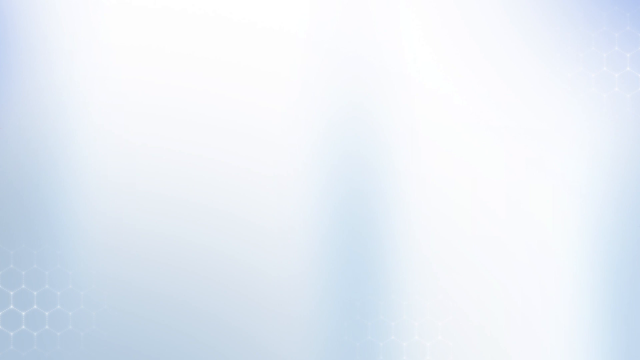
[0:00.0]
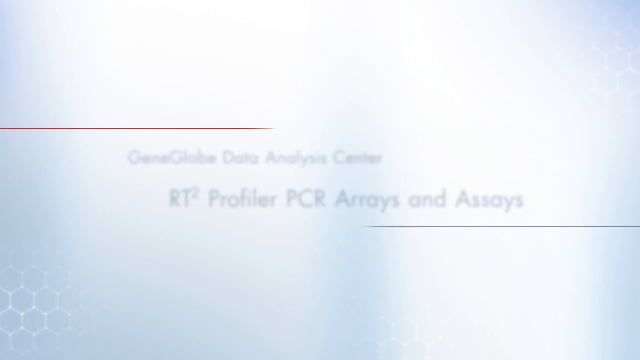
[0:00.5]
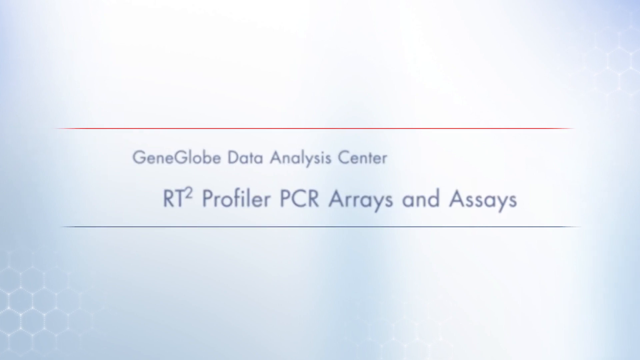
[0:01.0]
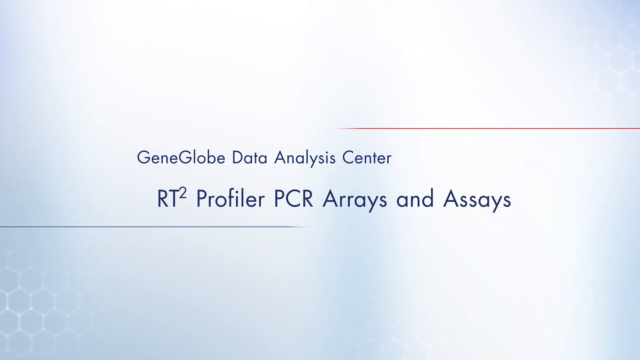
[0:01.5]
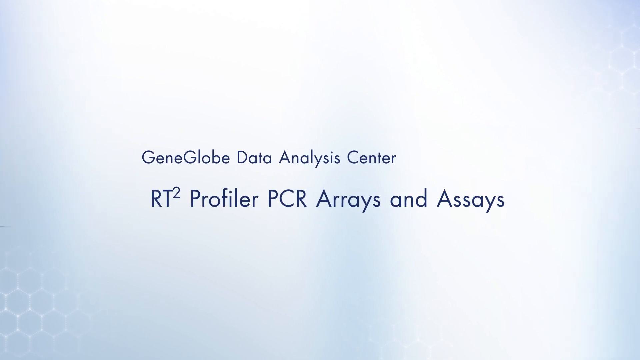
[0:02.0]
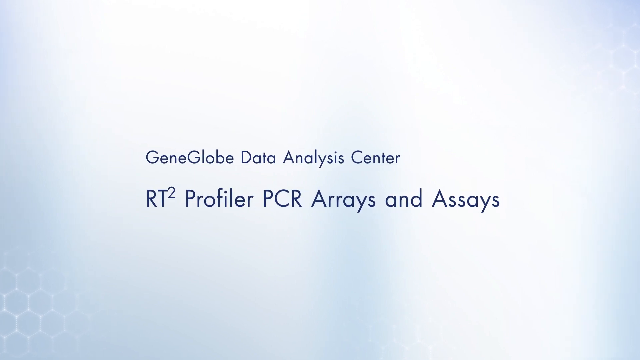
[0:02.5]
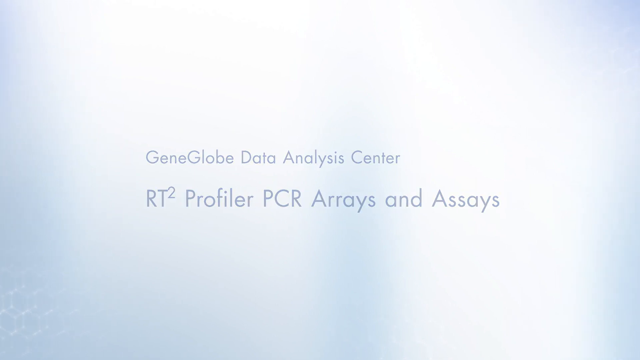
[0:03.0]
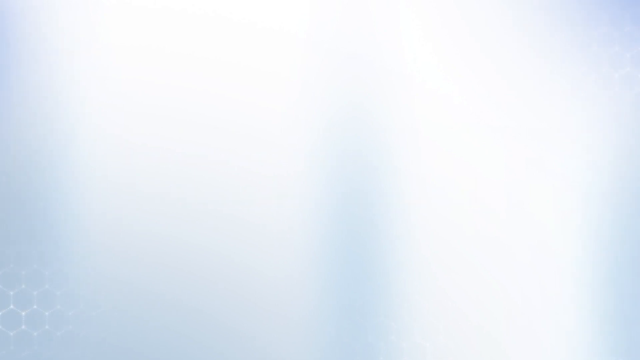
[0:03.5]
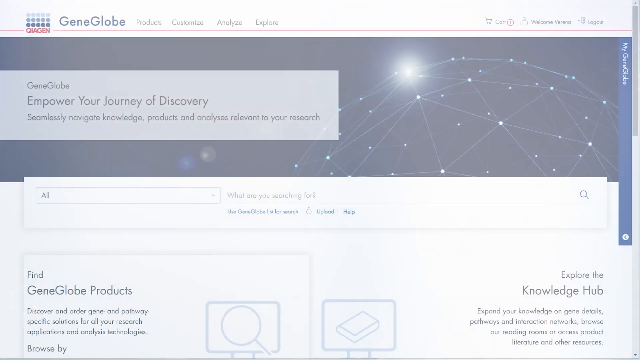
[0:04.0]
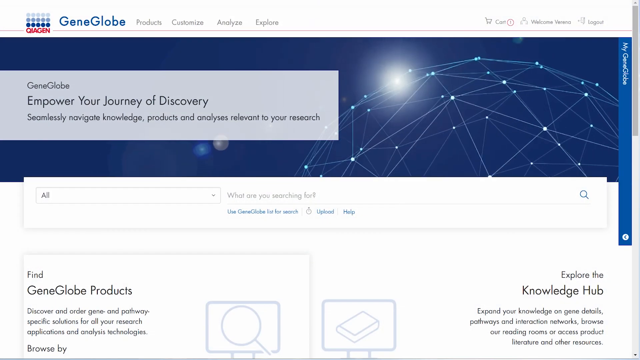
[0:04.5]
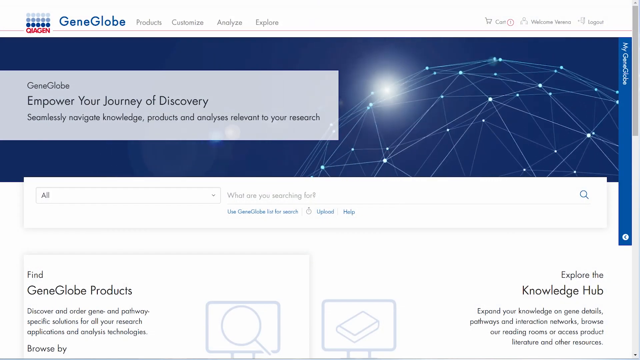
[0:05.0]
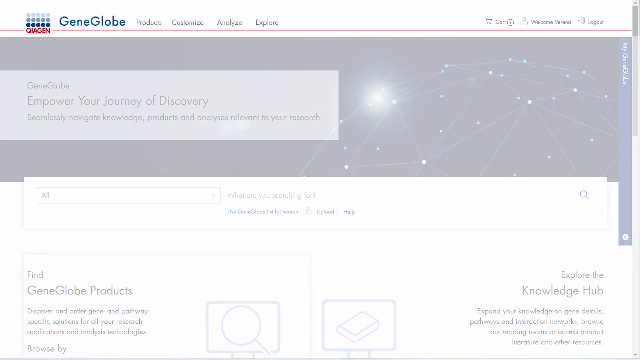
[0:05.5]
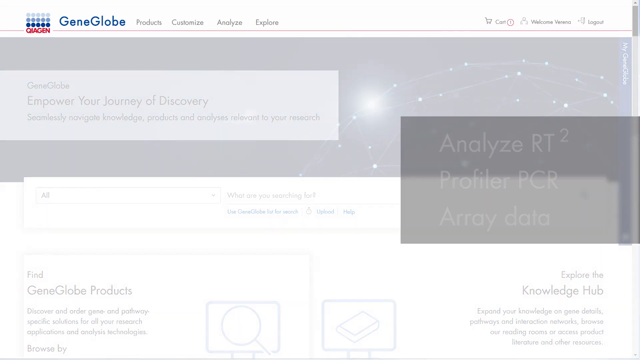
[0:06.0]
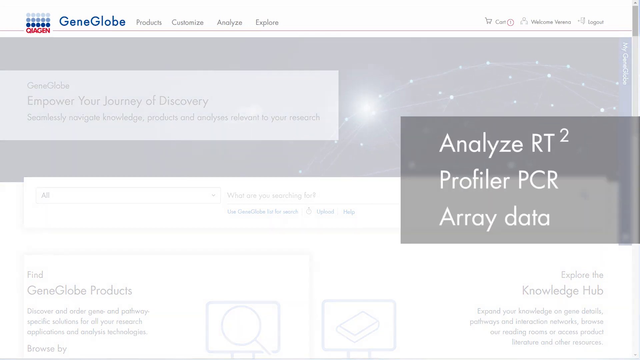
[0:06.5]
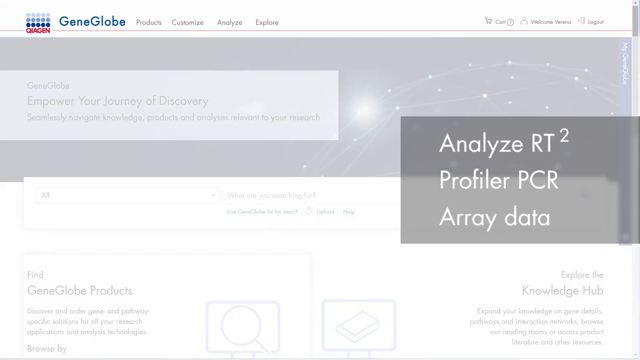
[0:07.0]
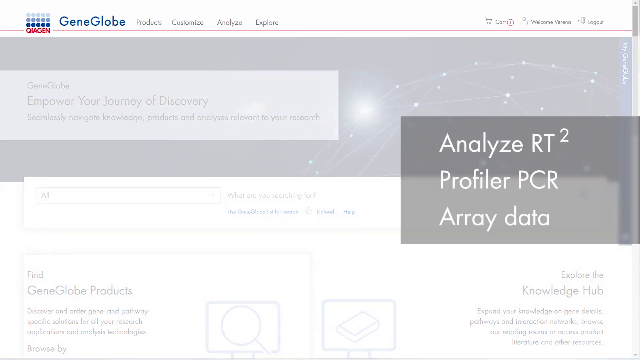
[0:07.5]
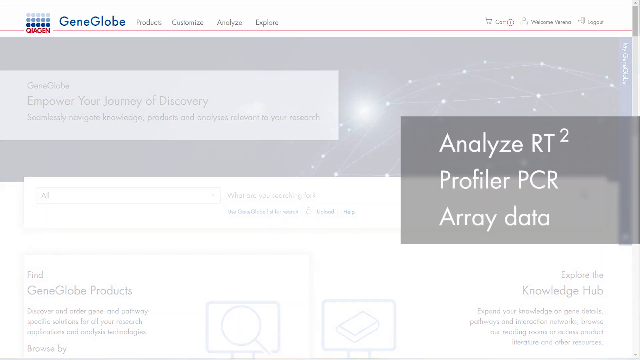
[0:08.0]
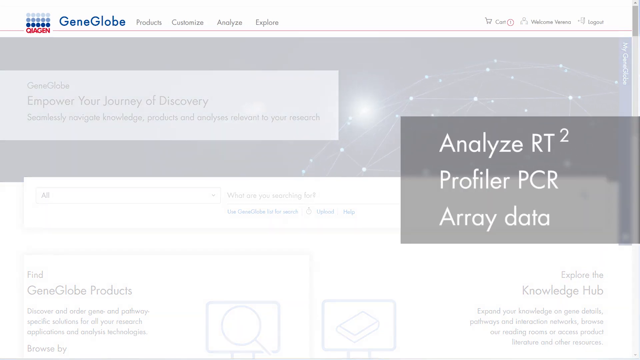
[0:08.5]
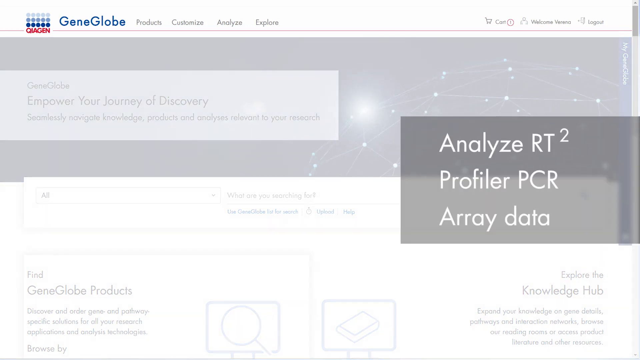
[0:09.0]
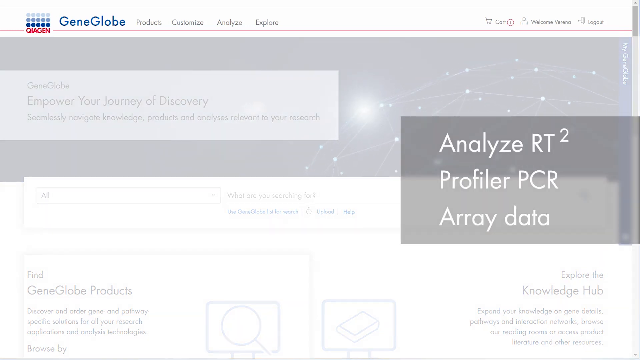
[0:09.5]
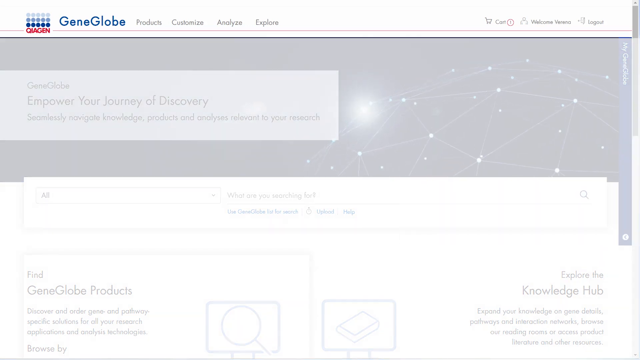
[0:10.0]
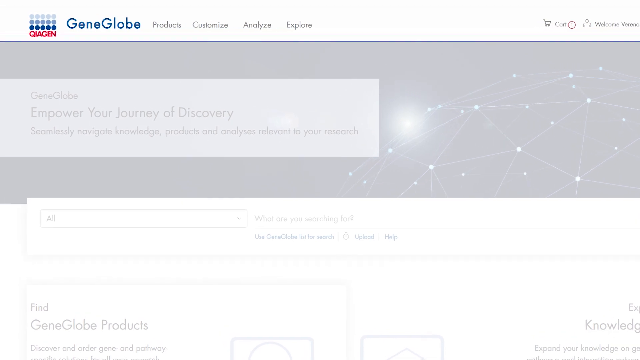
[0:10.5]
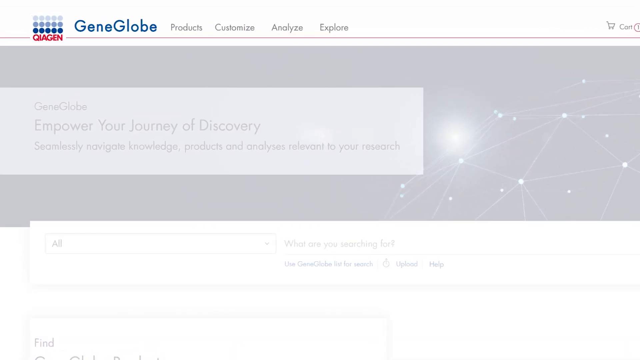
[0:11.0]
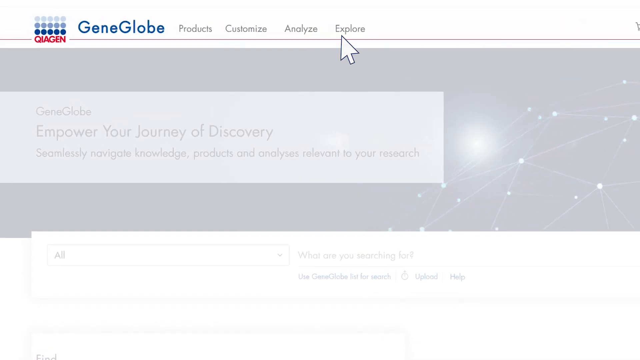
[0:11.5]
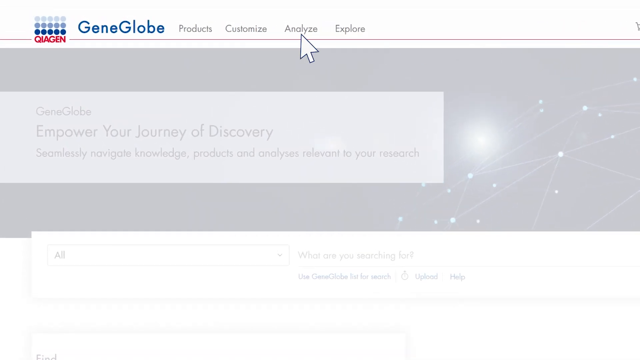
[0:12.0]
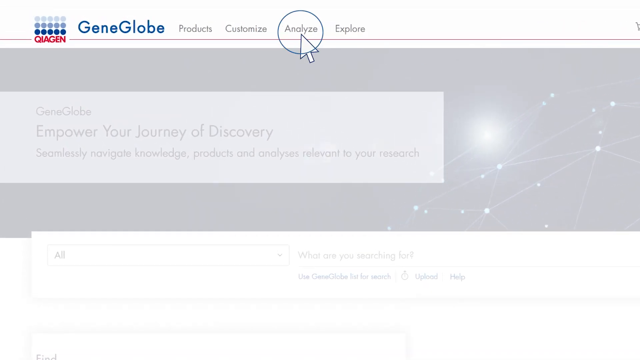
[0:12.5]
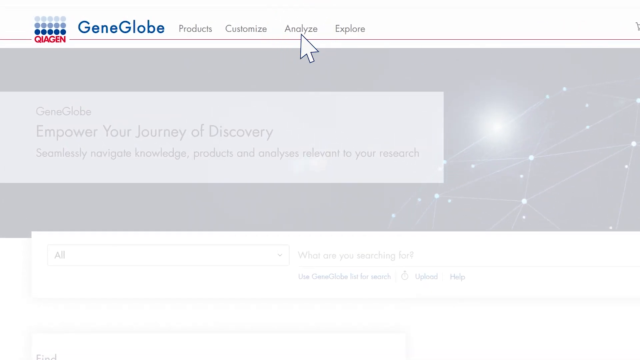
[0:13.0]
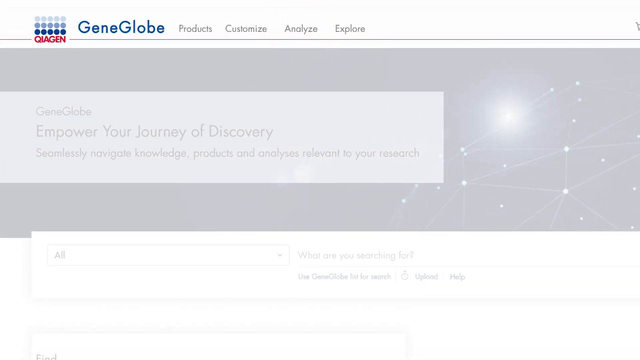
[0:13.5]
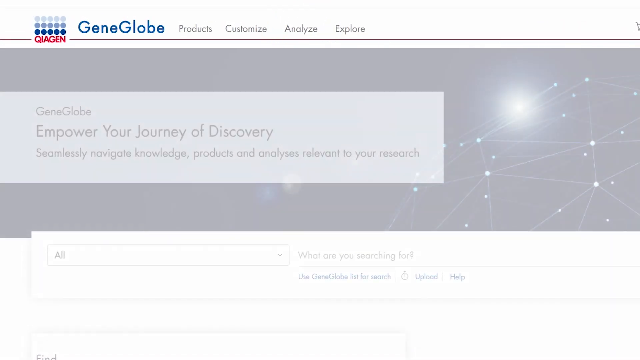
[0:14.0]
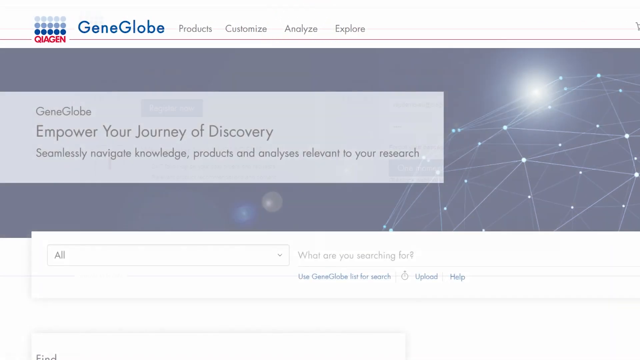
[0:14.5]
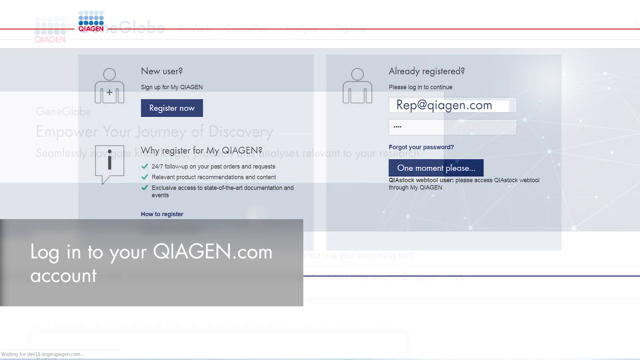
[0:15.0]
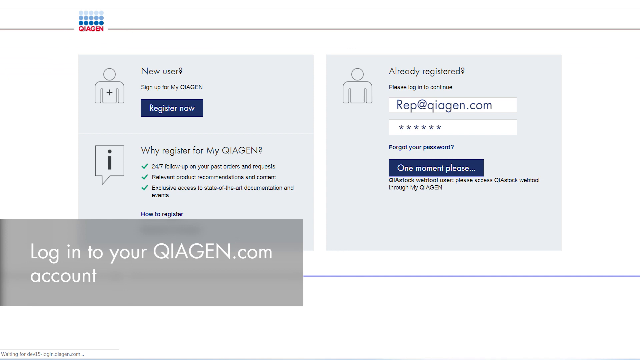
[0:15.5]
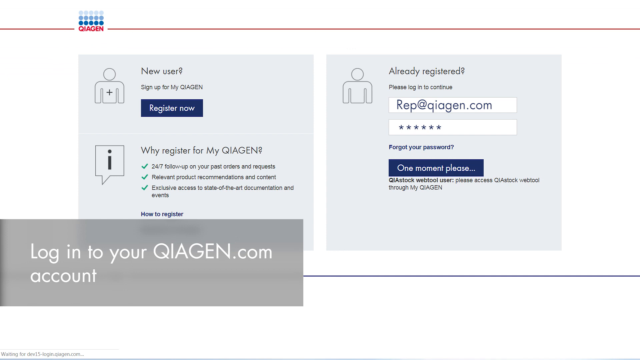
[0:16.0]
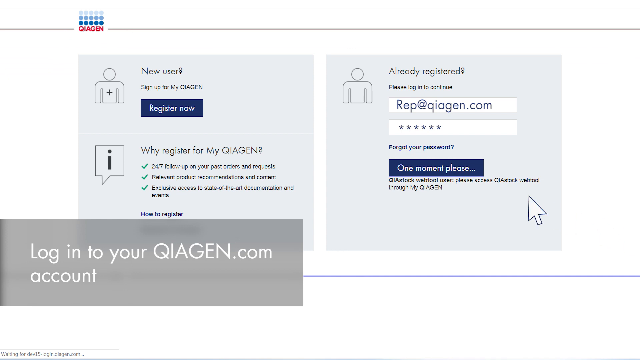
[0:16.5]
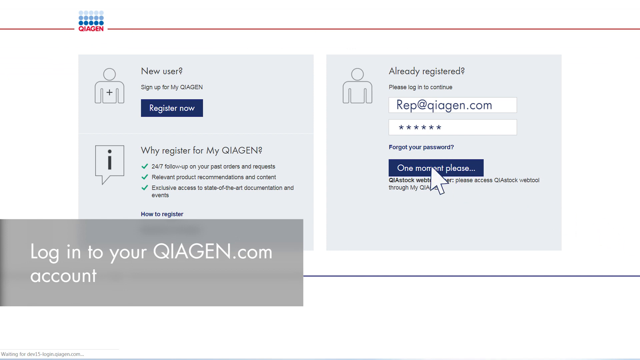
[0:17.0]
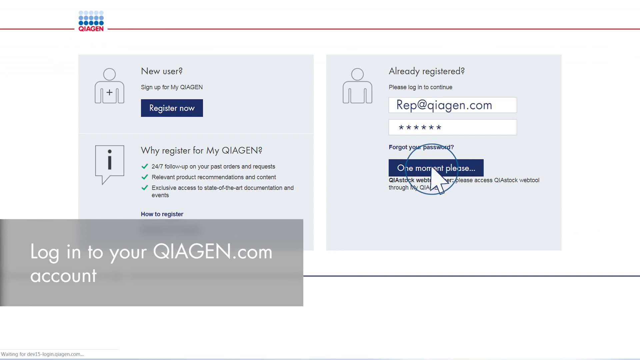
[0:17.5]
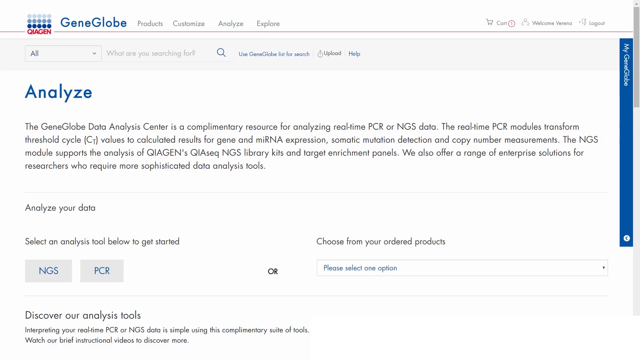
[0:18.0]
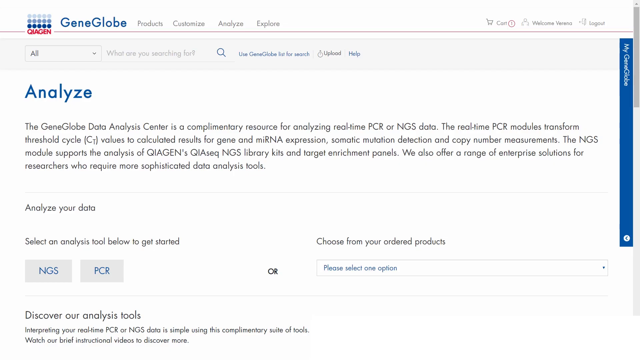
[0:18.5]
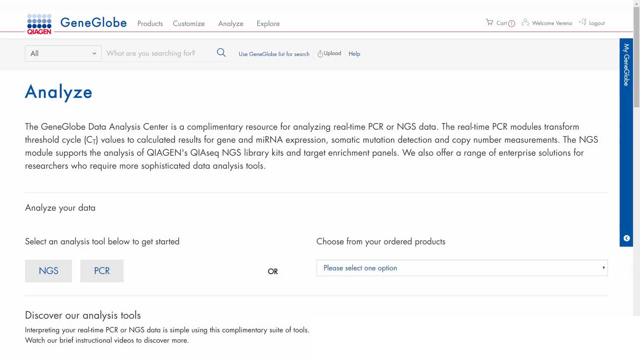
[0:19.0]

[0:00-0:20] The video begins with a PowerPoint presentation. The first slide appears to present GenuGlobe Data Analysis Center RT2 Profile PCR Arrays and Assays, written in black text on a white background. It then cuts to a website with text including "your journey of discovery", "Seamlessly navigate knowledge, products, and analysis relevant to your research", "GenuGlobe products", "pathway-specific solutions for all your research", "Application and analysis technologies", "Explore the knowledge app" and "Expand your knowledge on the gene details, pathways, and interaction networks." The view zooms in on one portion of the website, a mouse pointer appears on the screen and selects "Analyze" at the top. It then cuts to another page that says "New Users", listing items such as "24-7 follow-up on your past orders and requests", "relevant product recommendations and content" and "exclusive access".